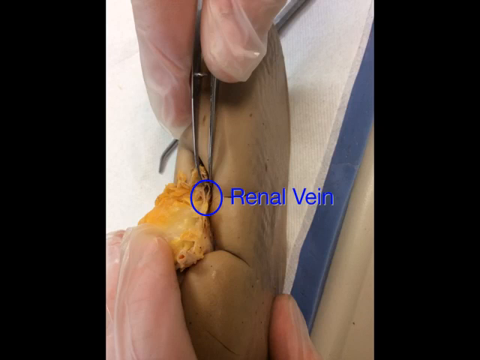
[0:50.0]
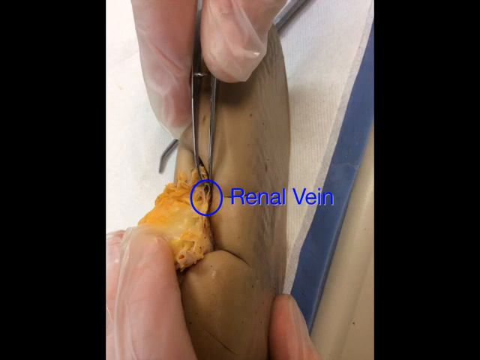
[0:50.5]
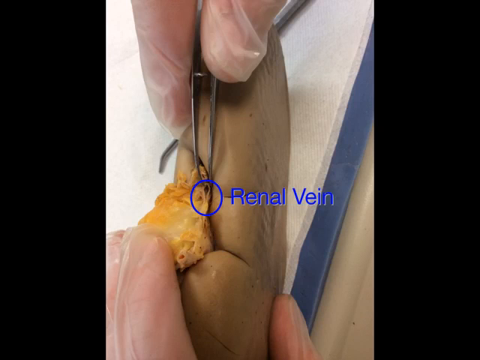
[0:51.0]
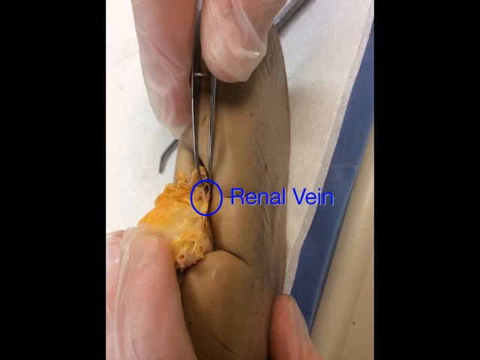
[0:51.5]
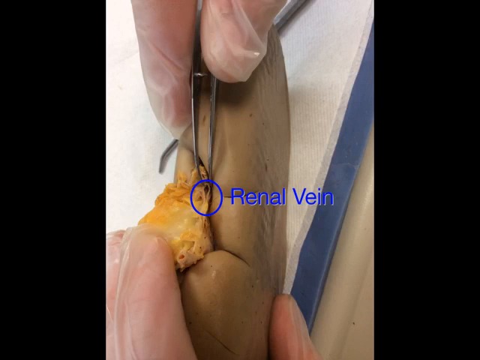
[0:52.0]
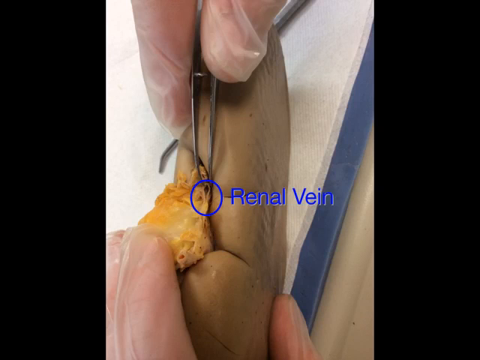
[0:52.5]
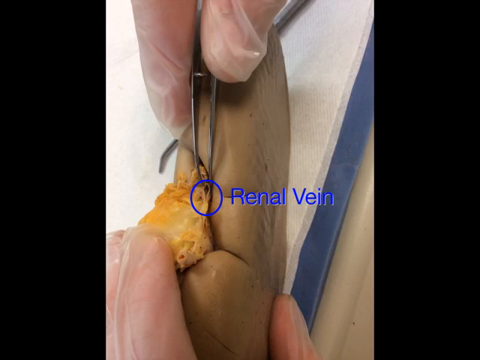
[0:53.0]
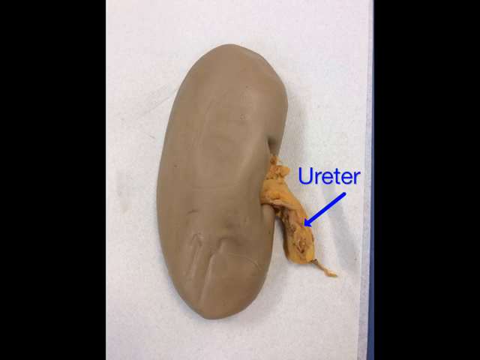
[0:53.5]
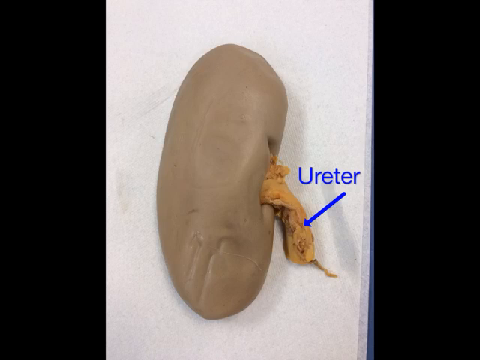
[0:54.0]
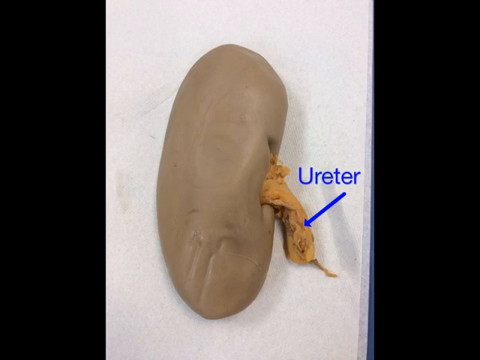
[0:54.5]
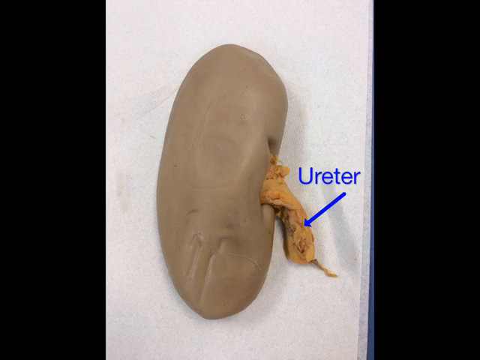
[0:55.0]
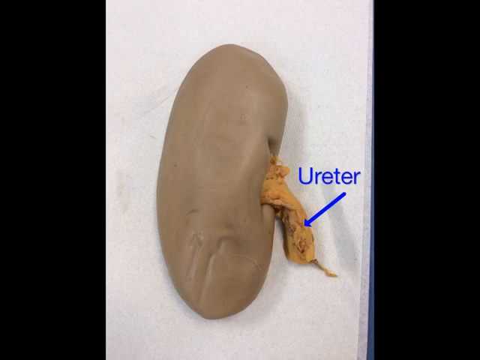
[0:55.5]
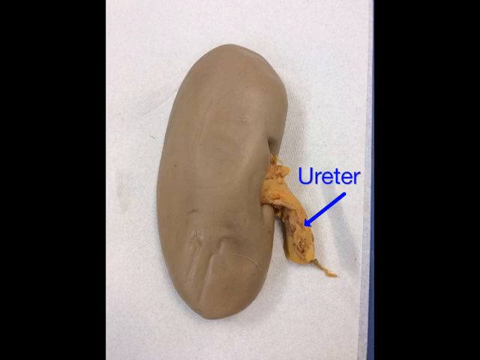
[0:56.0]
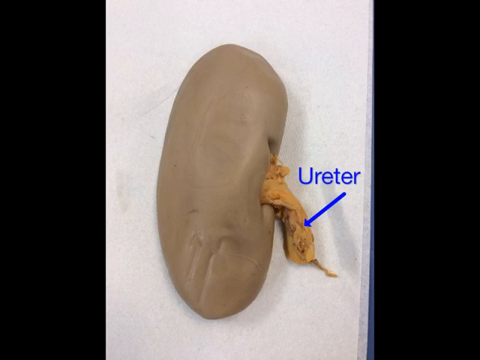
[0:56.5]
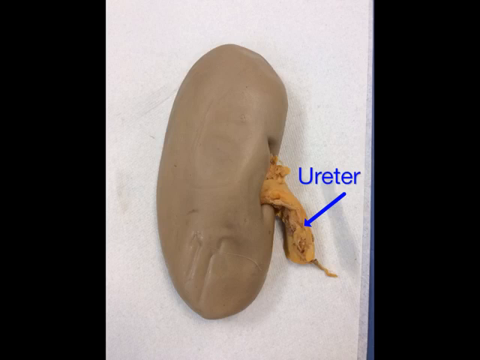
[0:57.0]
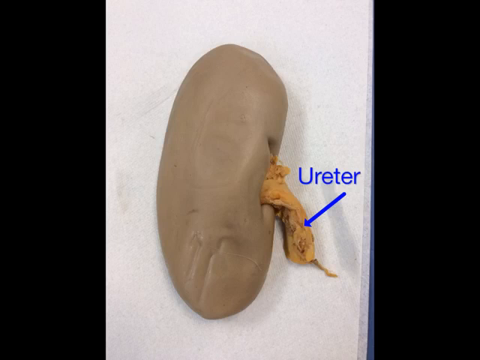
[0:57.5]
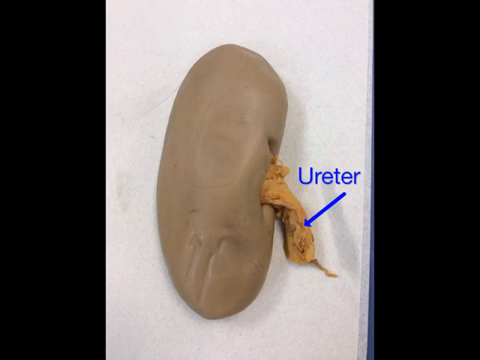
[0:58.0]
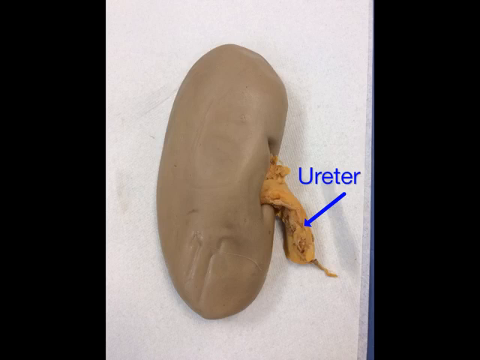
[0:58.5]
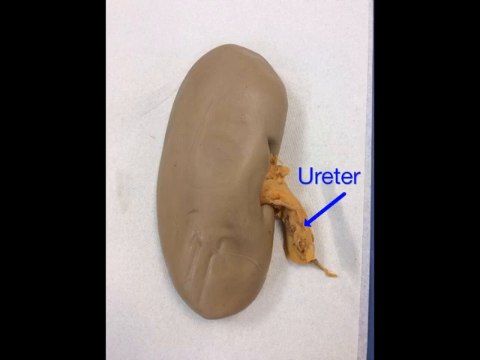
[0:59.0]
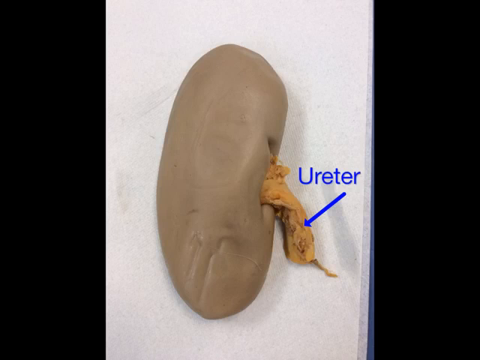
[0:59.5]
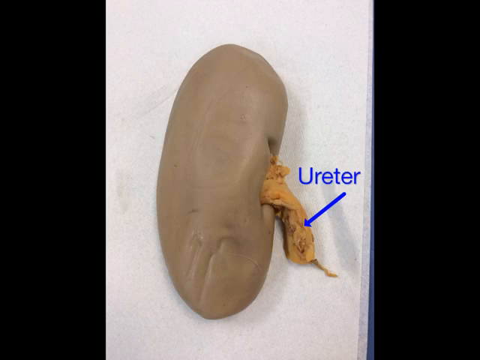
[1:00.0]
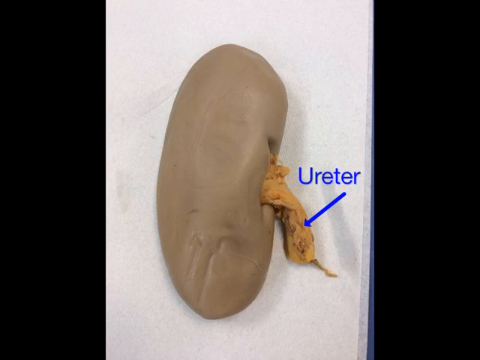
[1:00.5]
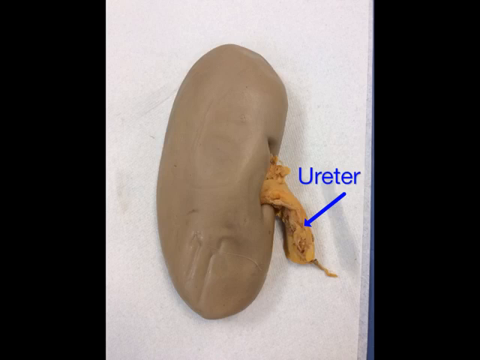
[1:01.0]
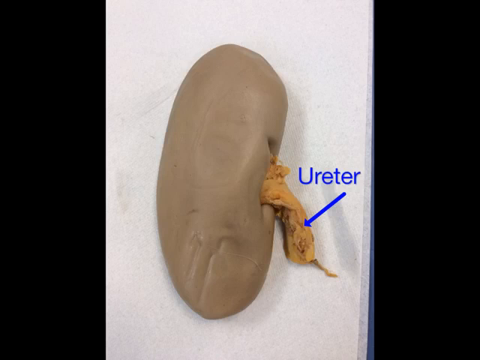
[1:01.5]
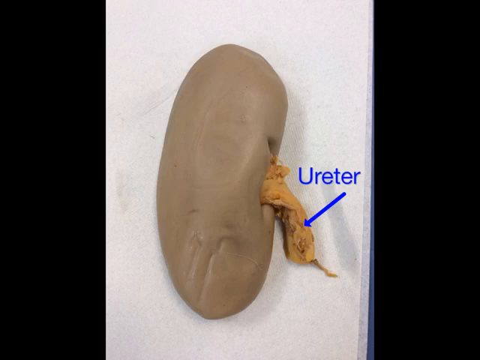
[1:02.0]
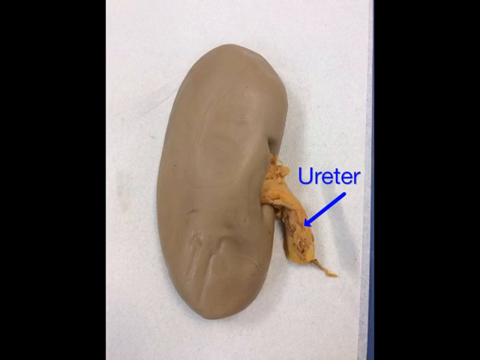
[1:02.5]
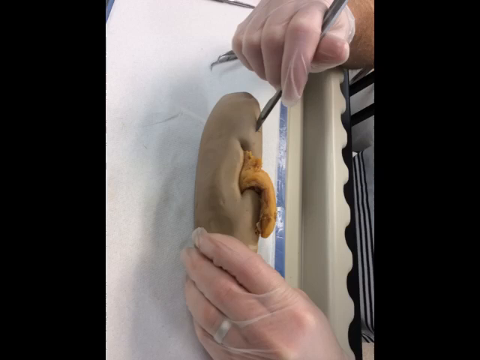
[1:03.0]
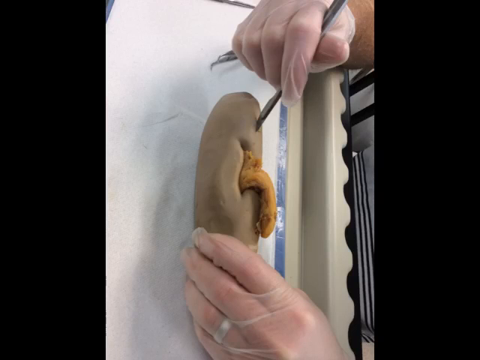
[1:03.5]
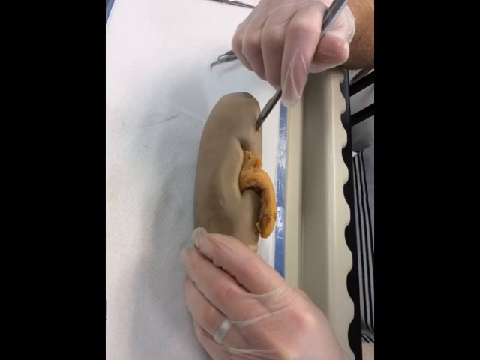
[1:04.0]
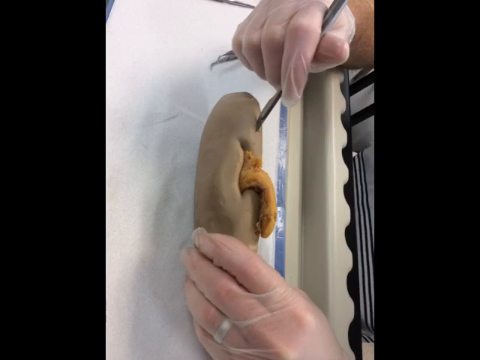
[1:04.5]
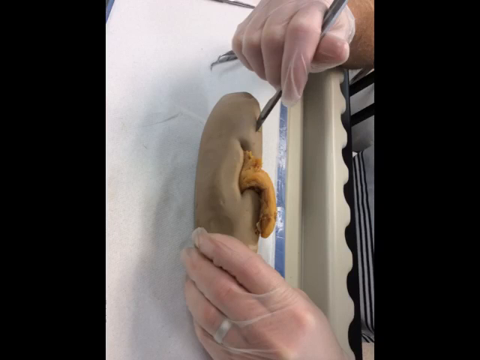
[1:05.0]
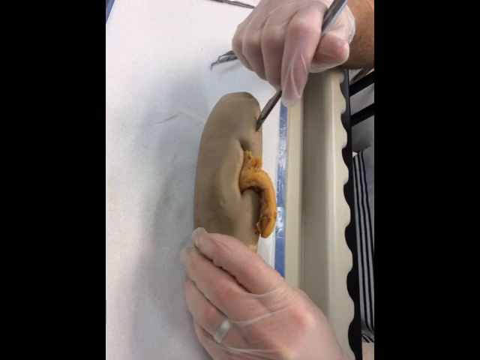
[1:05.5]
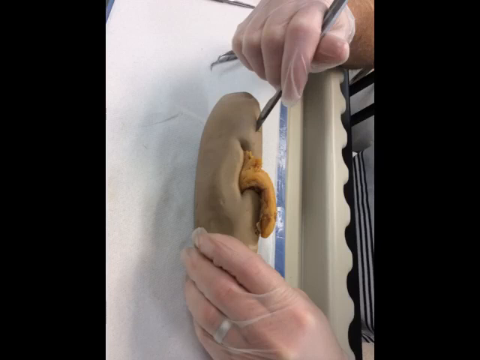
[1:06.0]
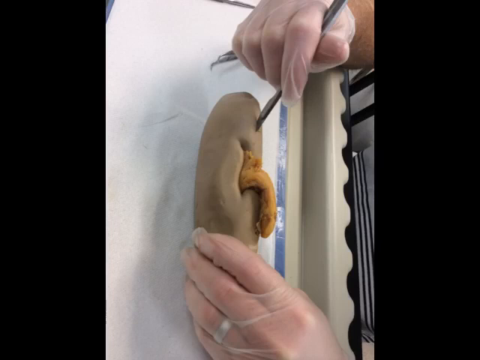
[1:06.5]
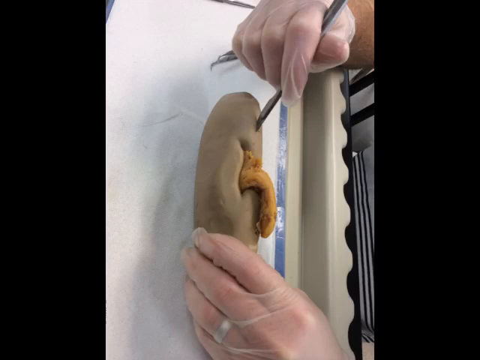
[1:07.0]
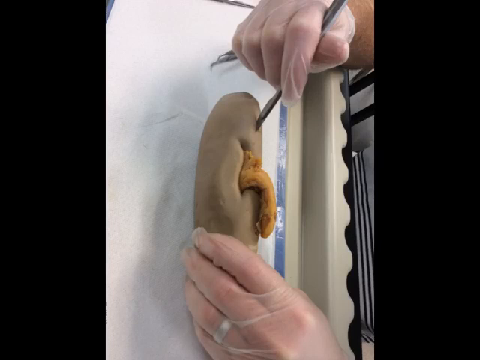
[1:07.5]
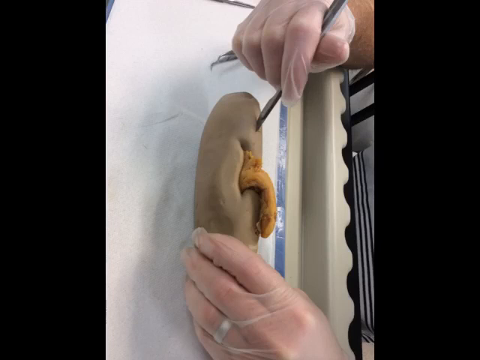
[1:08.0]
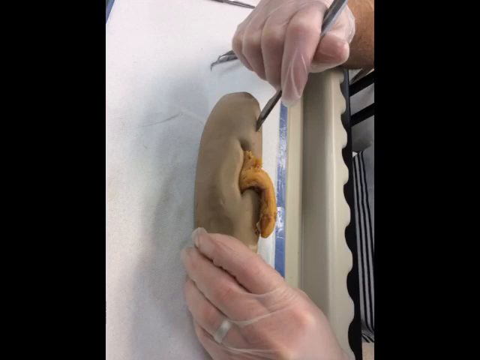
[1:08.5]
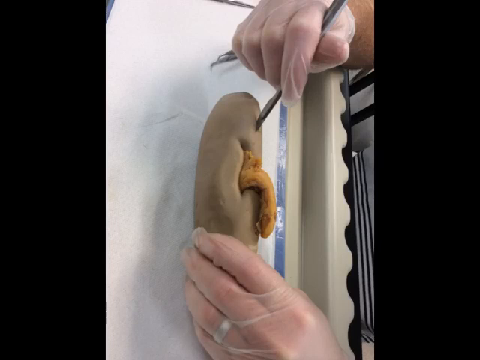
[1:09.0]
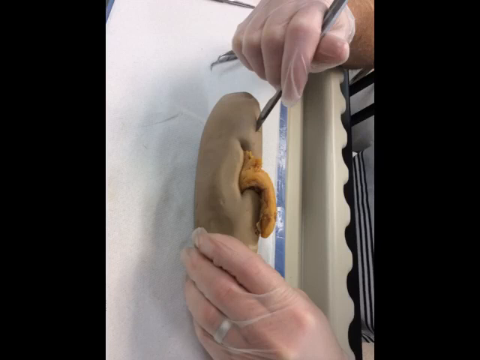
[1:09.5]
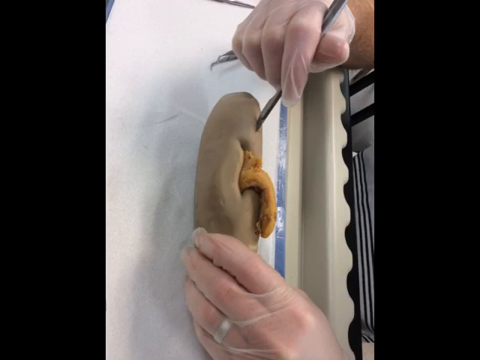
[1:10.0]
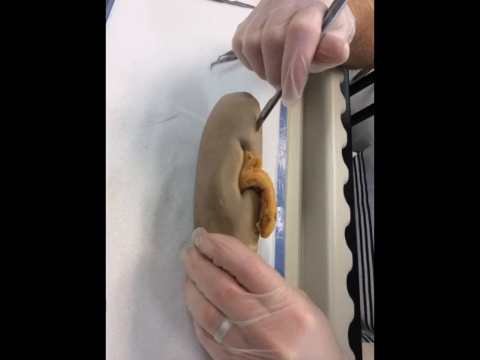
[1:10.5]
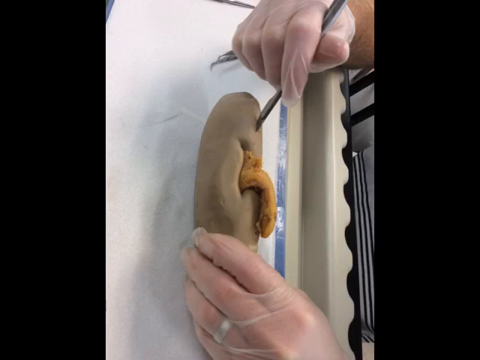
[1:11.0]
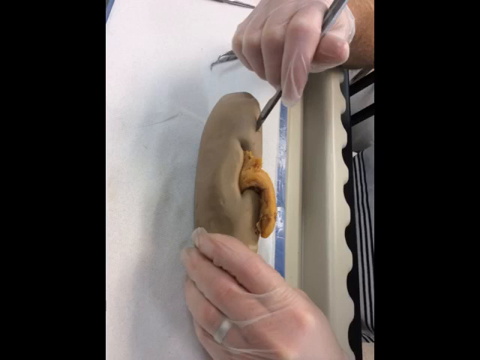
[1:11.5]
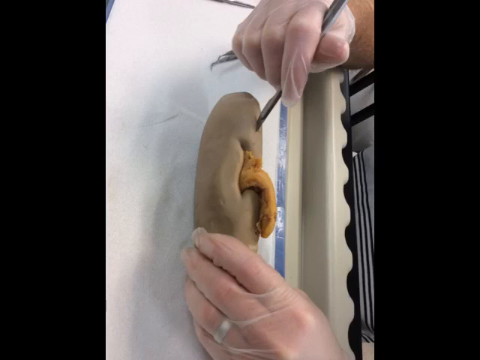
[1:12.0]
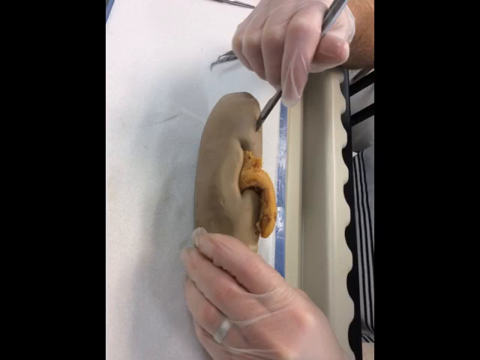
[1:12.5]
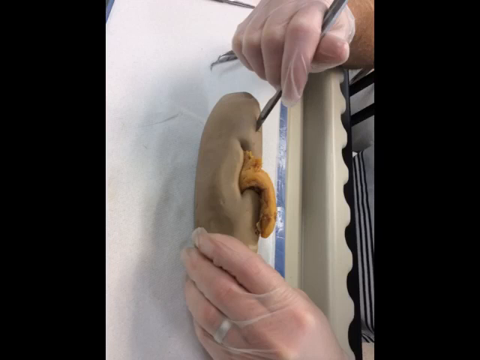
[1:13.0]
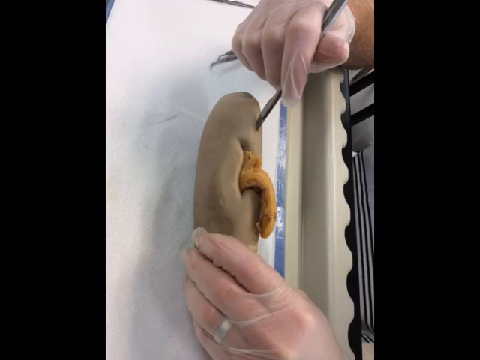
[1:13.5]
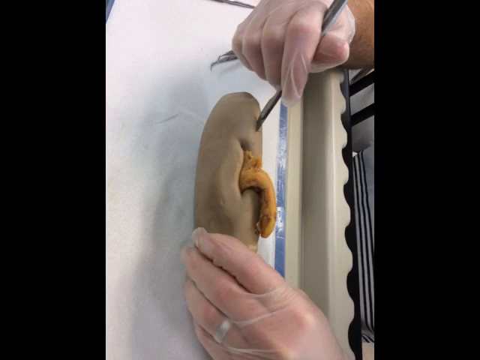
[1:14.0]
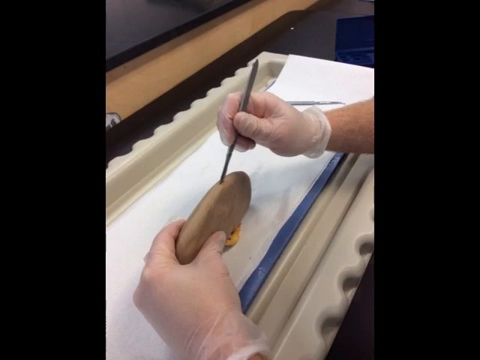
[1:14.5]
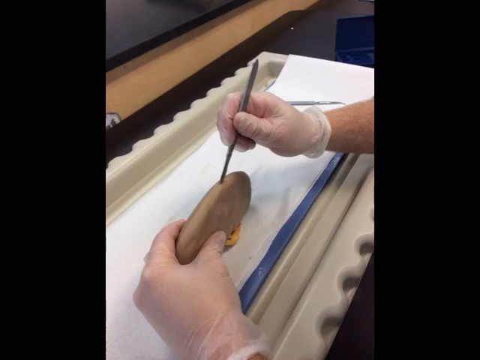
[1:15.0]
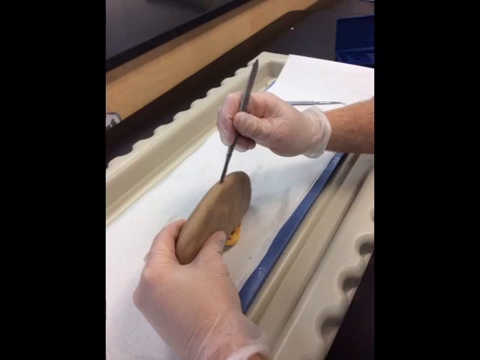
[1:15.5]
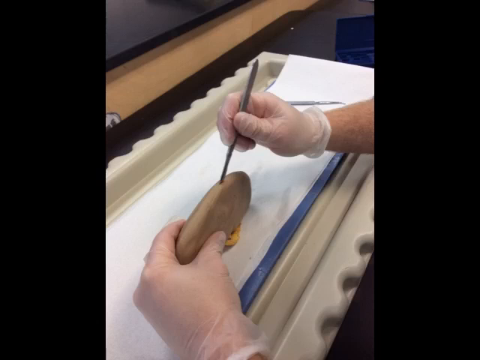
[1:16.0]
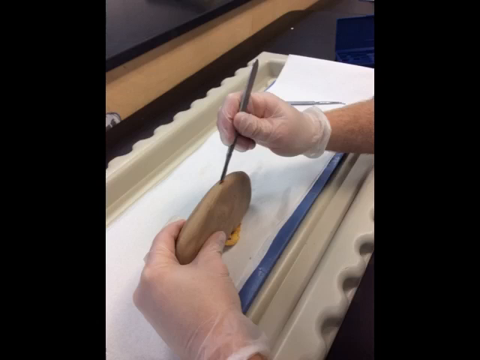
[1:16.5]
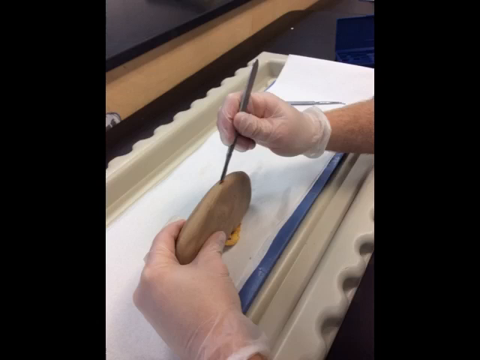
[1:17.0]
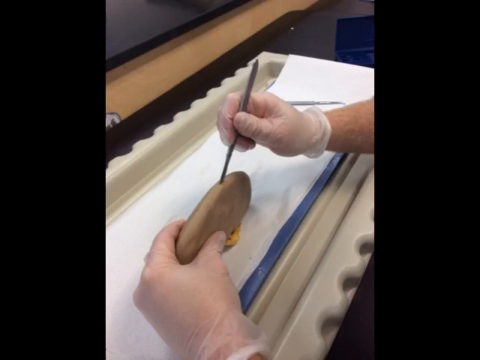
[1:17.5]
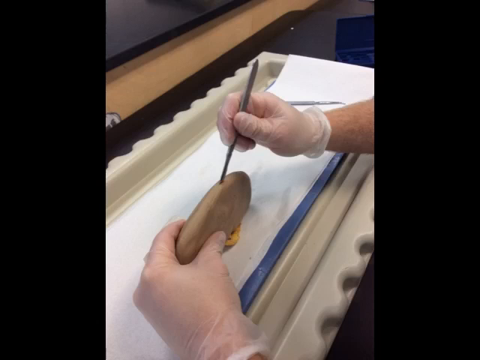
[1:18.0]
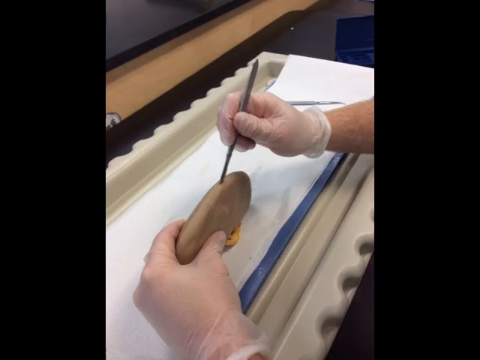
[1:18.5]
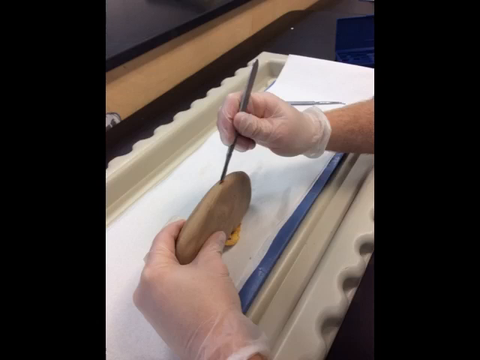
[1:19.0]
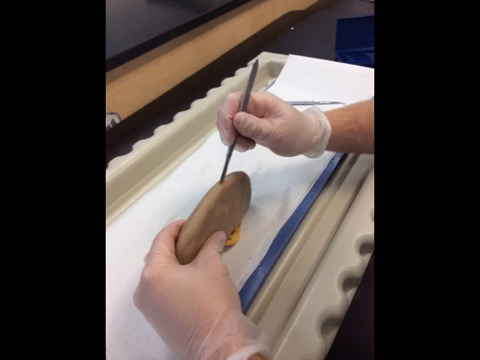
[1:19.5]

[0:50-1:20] A person holds a human kidney with the left hand on its lower part and a pair of tweezers in the right hand. At the end of the tweezers is a blue circle, and next to it the text reads "renal vein." The next image shows the ureter, an orange-like blob that looks like it comes out of the right side of the kidney; it has been pulled out to demonstrate it. The rest of the kidney is a large egg-shaped object. The screen then changes to another still image of the entire kidney being held steady in the left hand, with a scalpel in the right hand, looking as if an incision may be starting. The kidney has then been turned over; the left hand holds it while the right hand places the scalpel on the very top edge of the kidney.